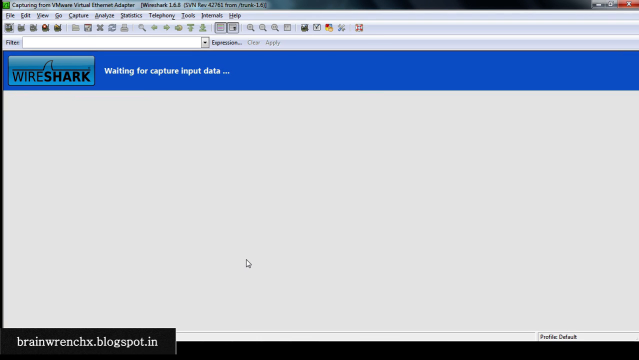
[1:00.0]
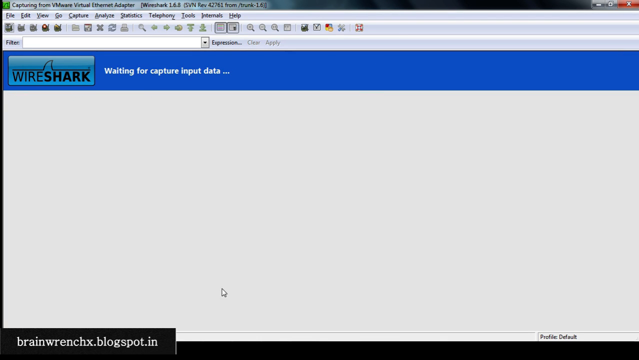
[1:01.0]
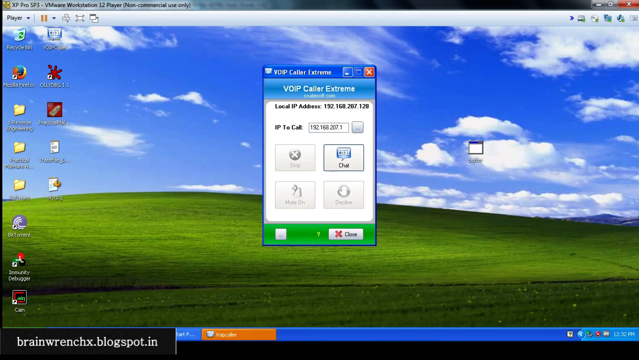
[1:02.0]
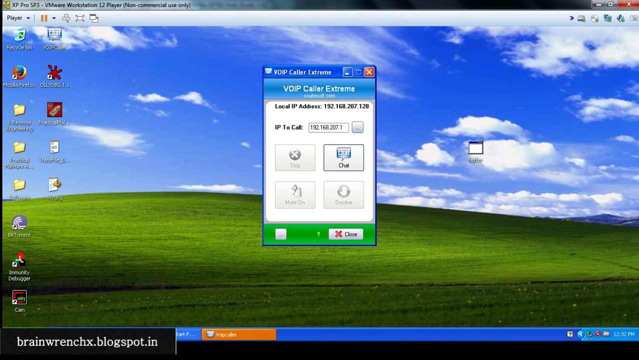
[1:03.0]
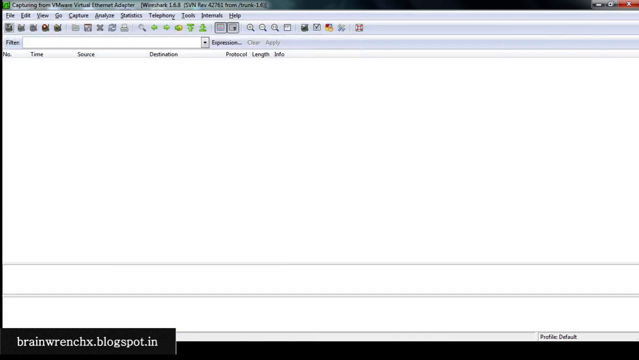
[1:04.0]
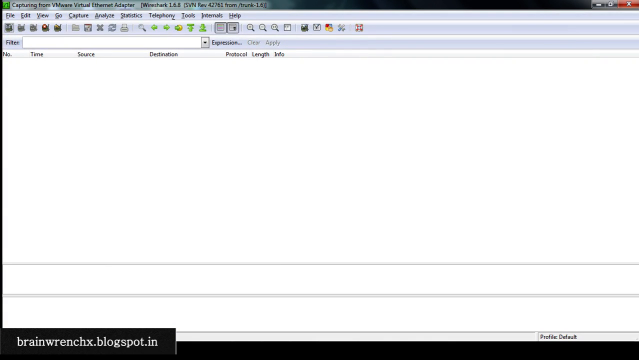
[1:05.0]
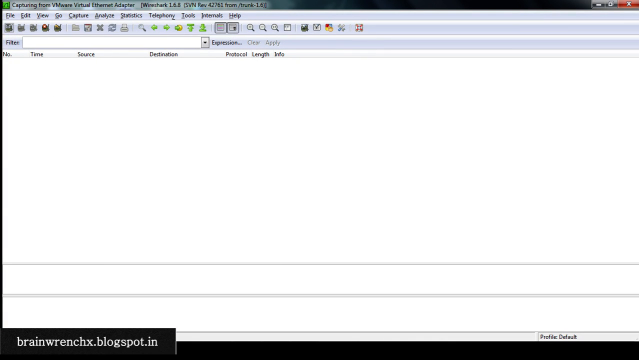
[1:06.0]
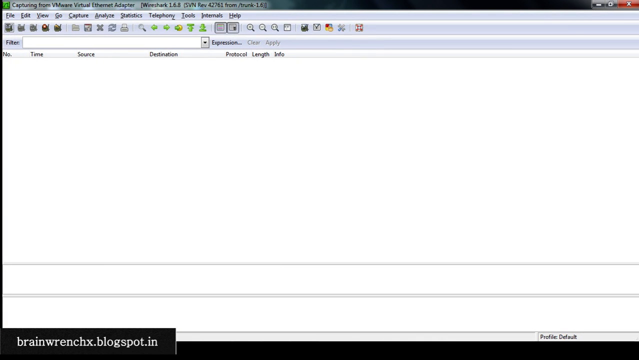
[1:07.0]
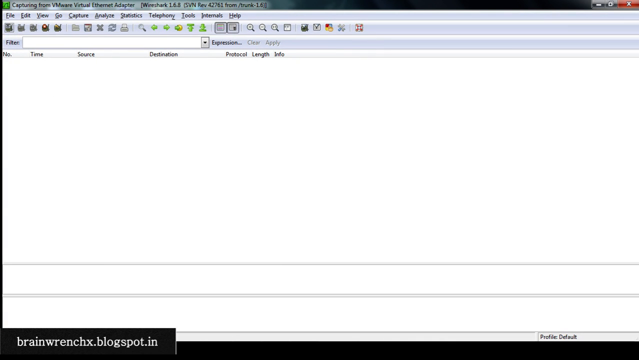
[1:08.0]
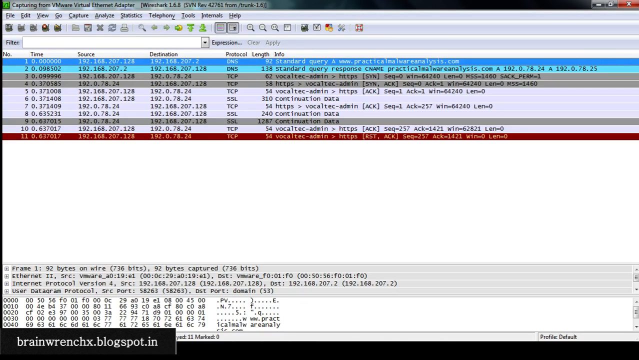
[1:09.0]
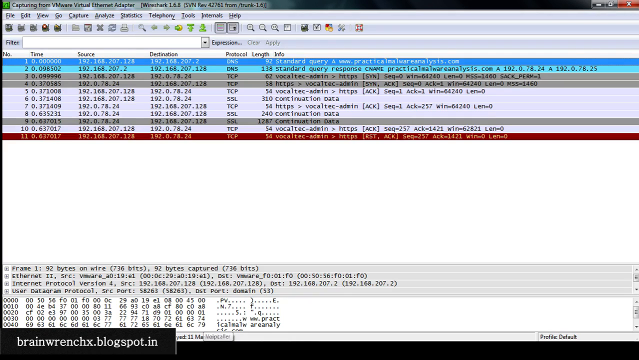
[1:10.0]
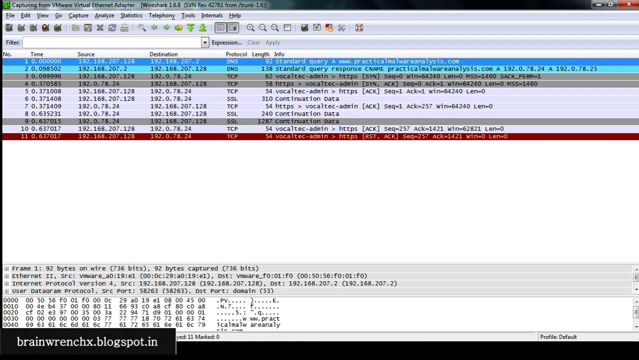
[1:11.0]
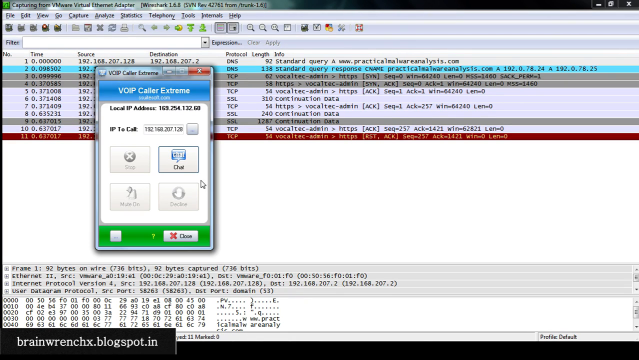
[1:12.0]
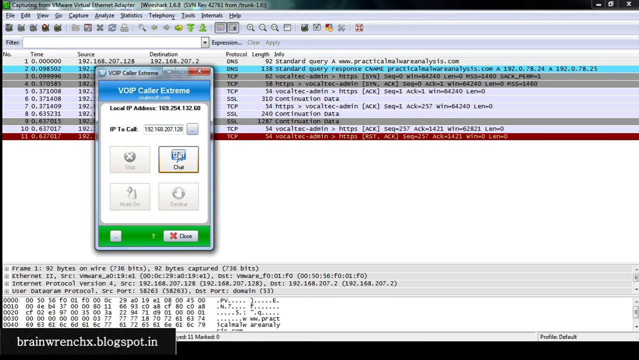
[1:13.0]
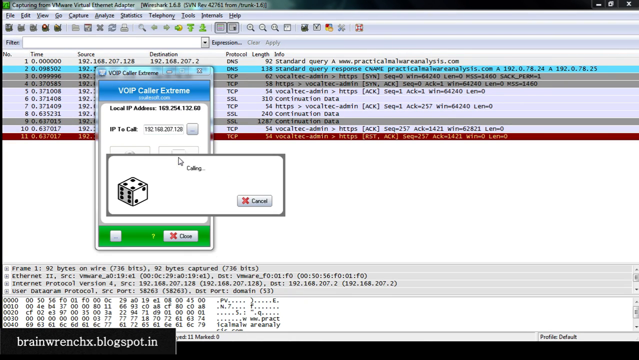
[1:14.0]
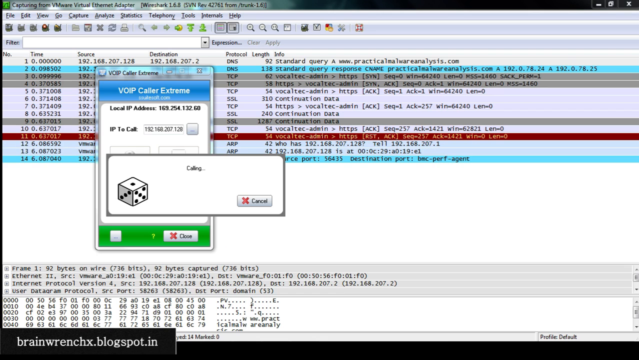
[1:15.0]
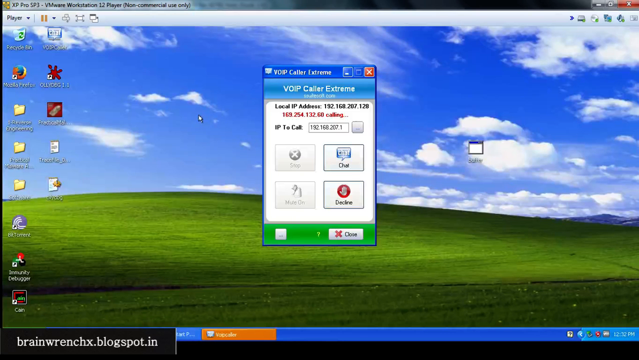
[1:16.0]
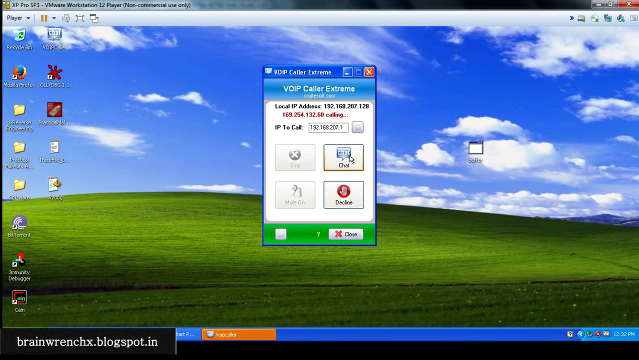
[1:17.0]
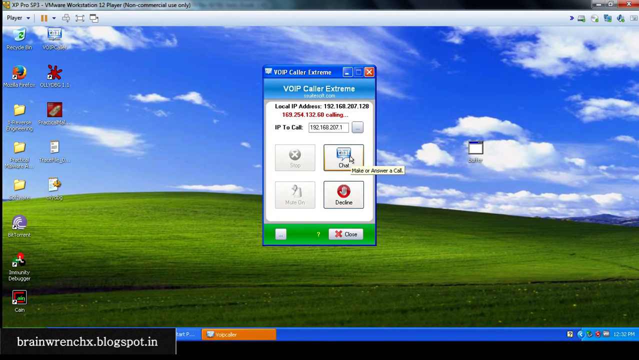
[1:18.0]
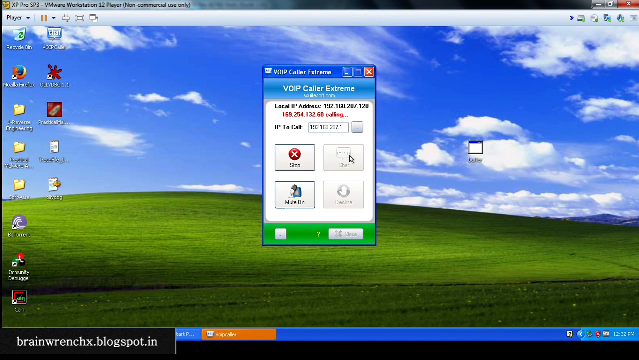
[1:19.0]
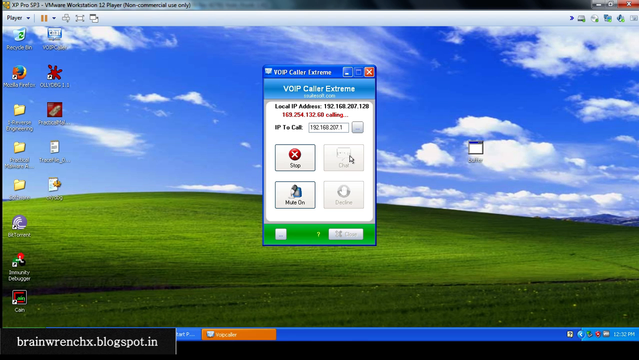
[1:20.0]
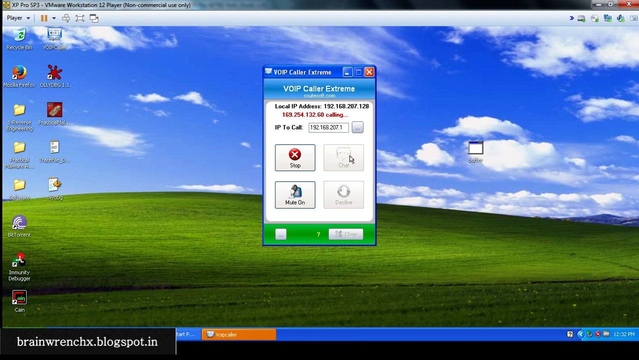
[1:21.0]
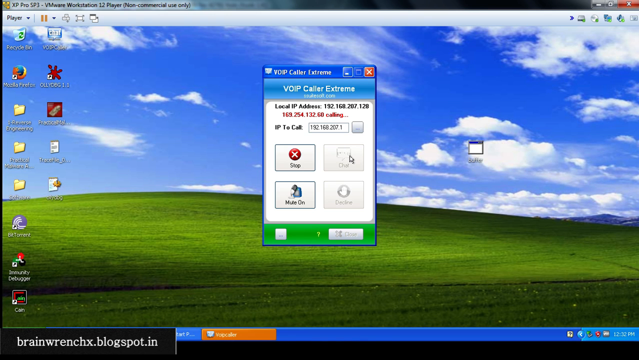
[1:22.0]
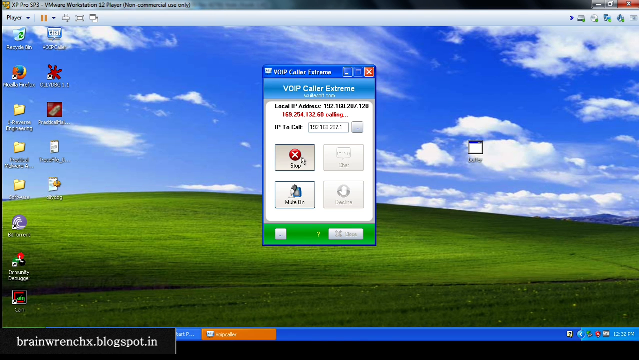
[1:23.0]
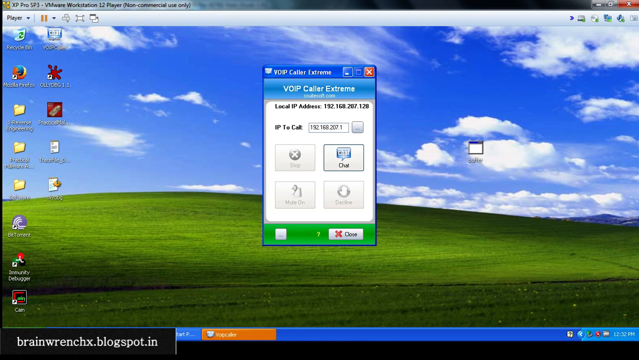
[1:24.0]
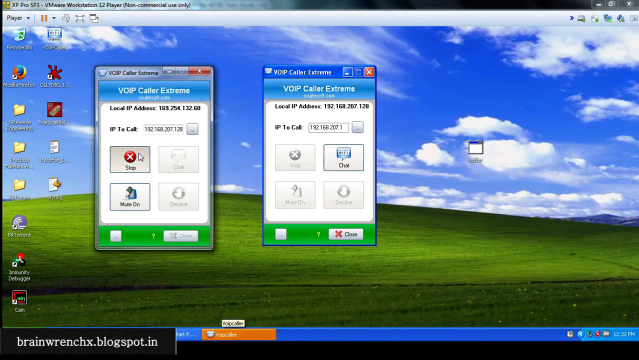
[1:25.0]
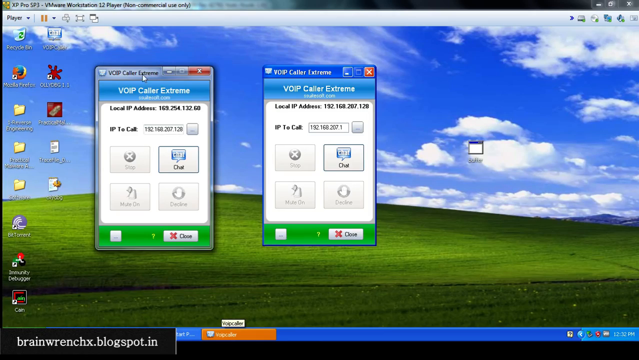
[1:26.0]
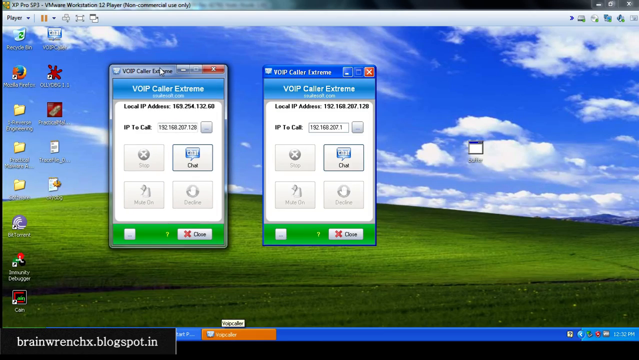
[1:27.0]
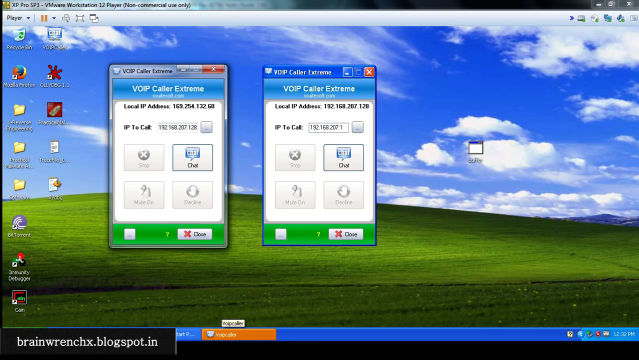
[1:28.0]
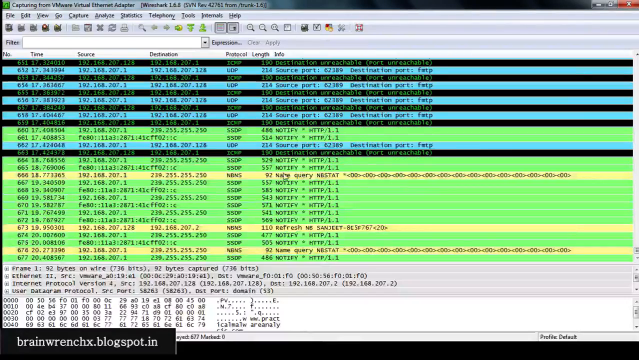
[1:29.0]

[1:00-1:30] The desktop appears to be Windows 7, and the video comes from a website called brainwrenchx.blogspot.in. What at first looks like code on the screen turns out to be a whole long list of IP addresses.